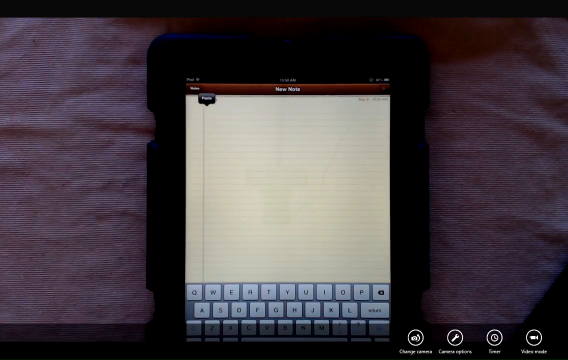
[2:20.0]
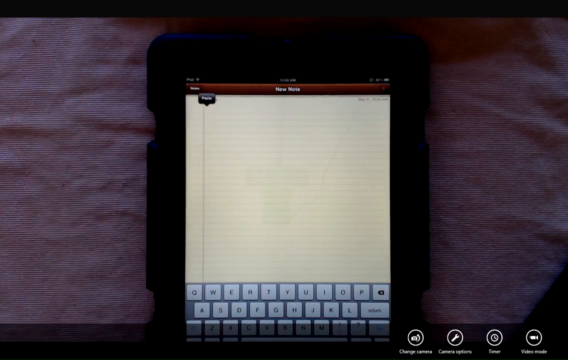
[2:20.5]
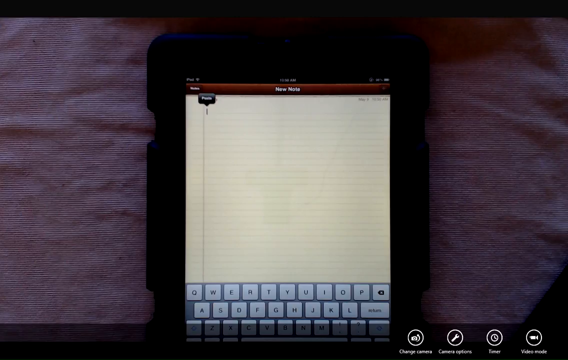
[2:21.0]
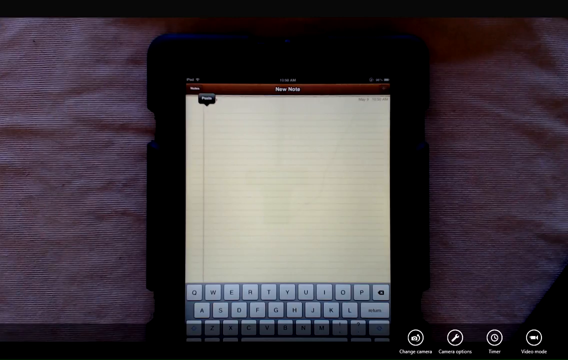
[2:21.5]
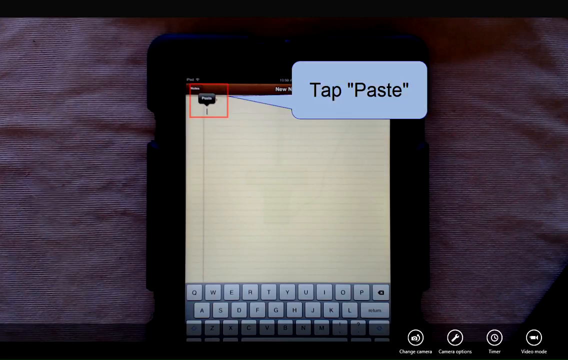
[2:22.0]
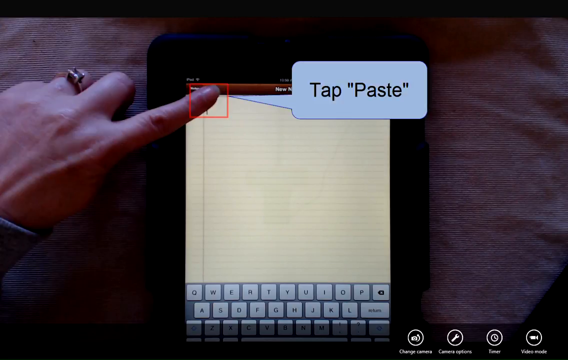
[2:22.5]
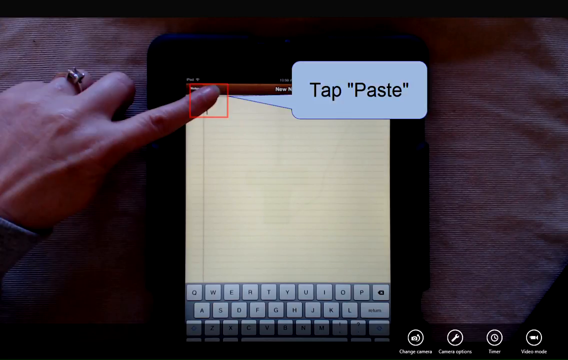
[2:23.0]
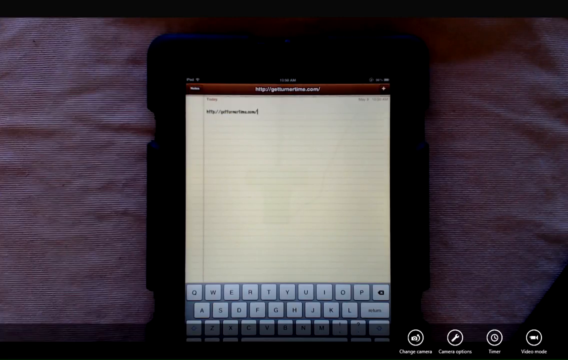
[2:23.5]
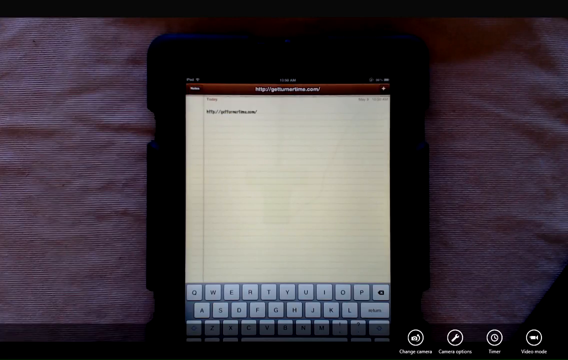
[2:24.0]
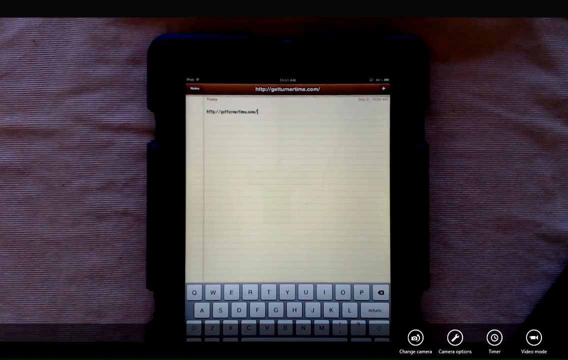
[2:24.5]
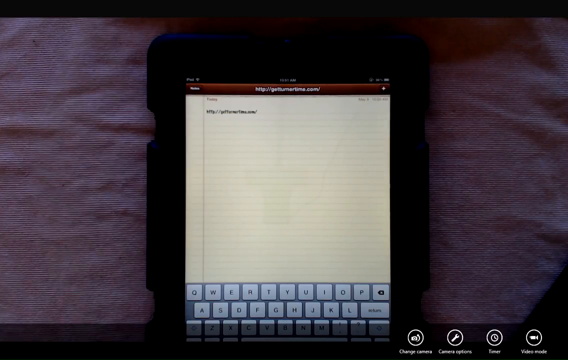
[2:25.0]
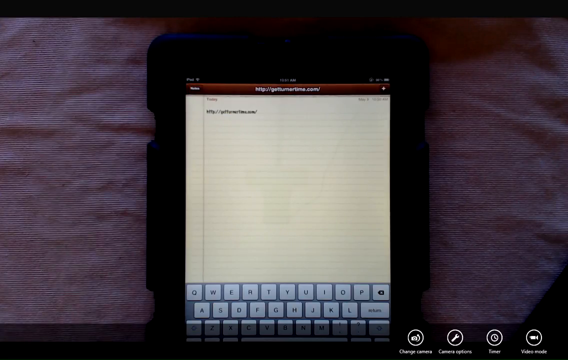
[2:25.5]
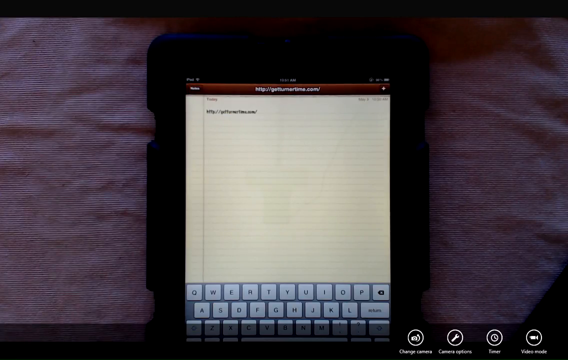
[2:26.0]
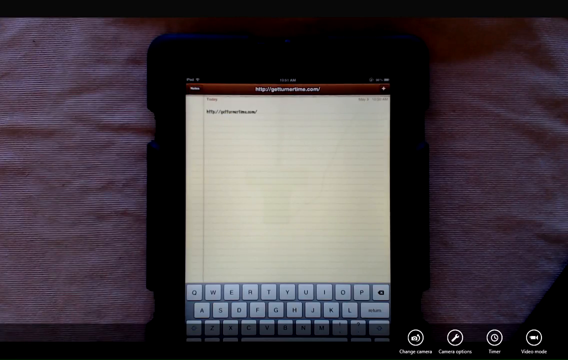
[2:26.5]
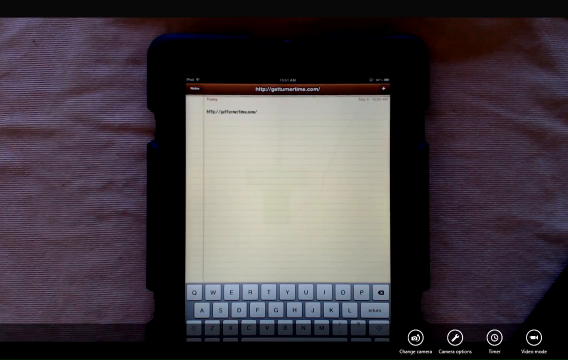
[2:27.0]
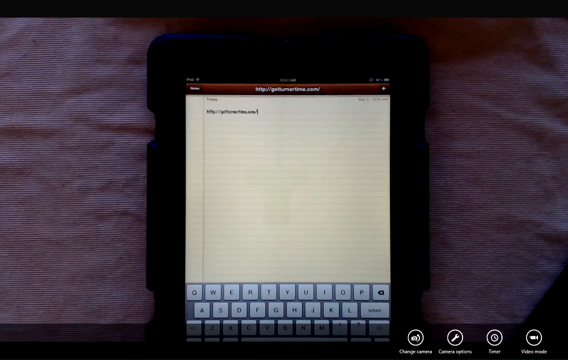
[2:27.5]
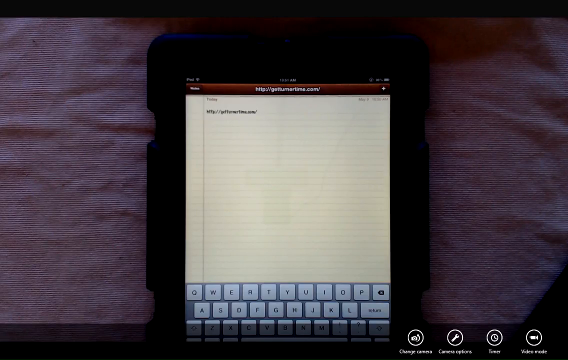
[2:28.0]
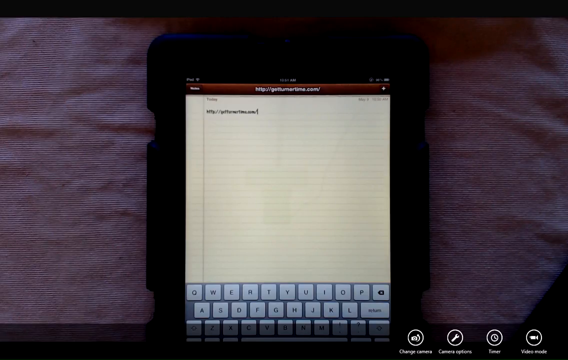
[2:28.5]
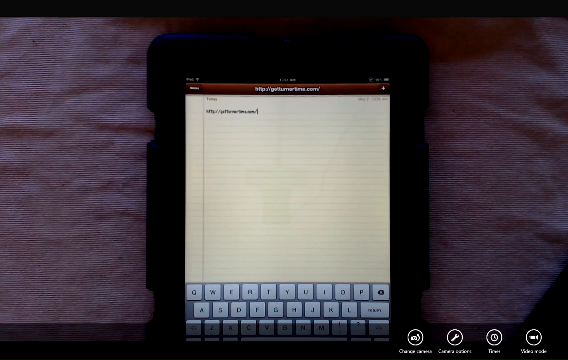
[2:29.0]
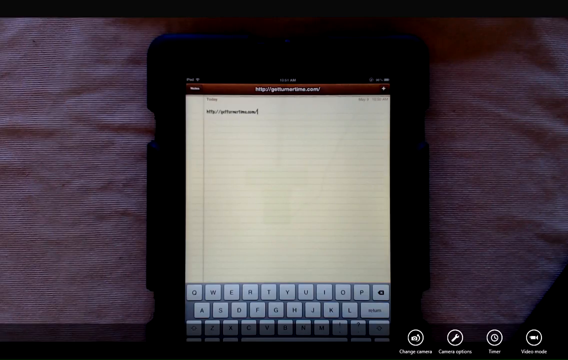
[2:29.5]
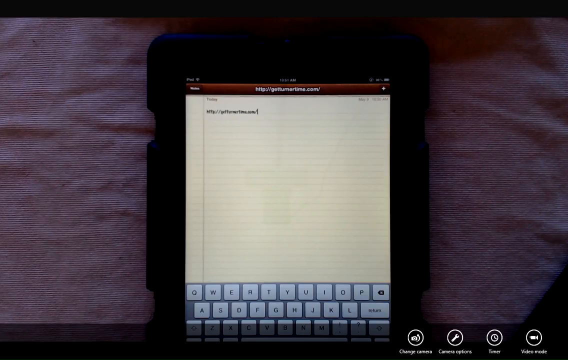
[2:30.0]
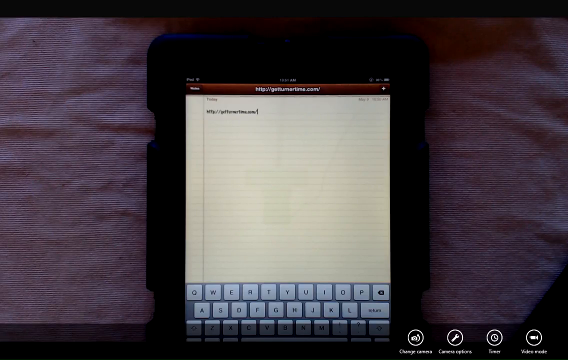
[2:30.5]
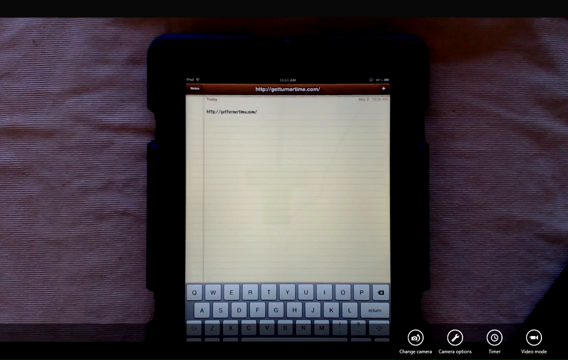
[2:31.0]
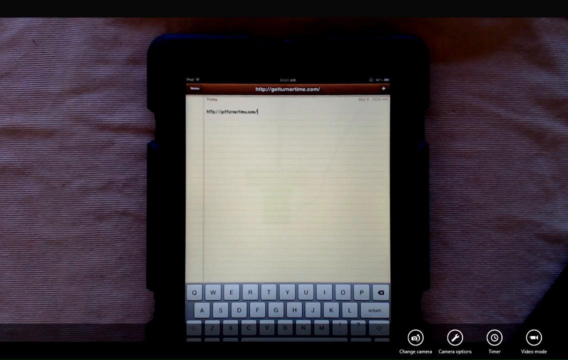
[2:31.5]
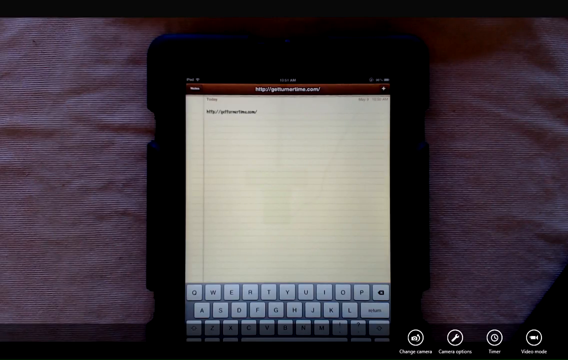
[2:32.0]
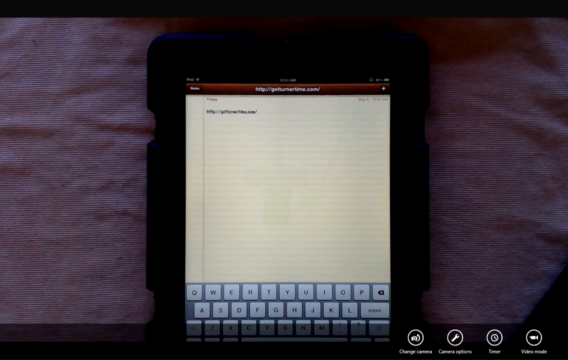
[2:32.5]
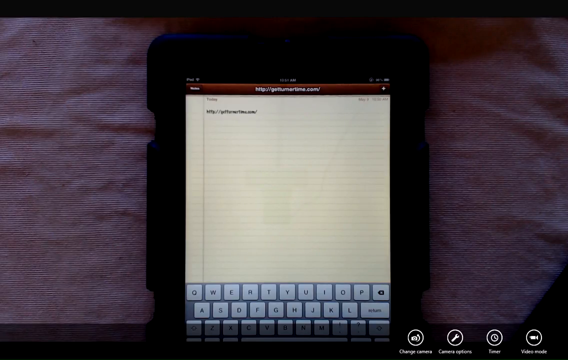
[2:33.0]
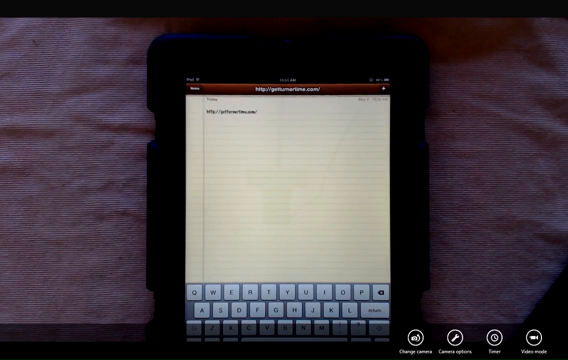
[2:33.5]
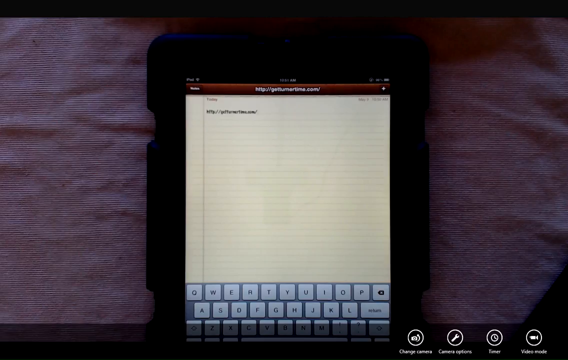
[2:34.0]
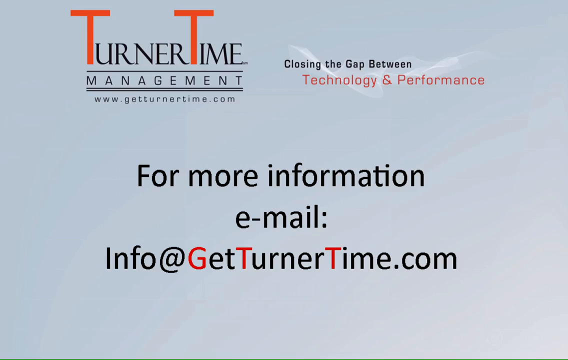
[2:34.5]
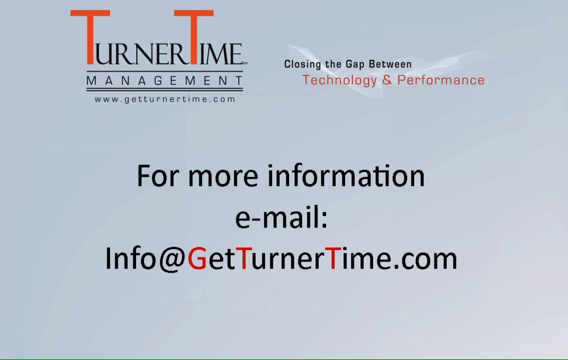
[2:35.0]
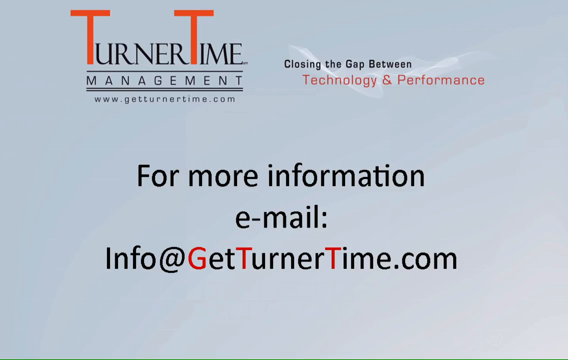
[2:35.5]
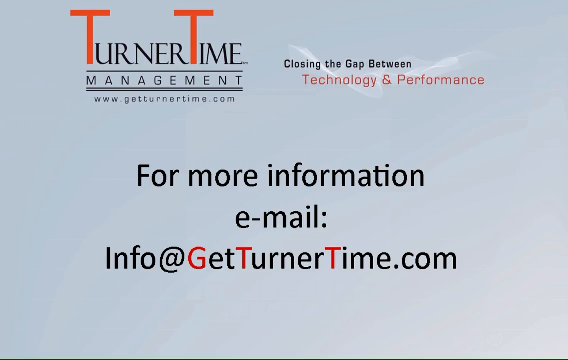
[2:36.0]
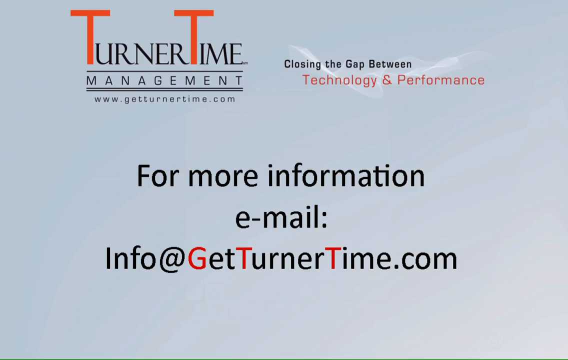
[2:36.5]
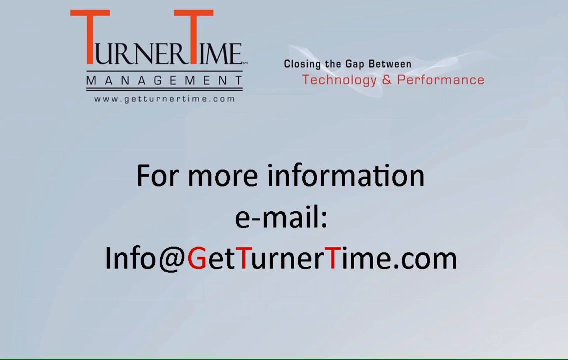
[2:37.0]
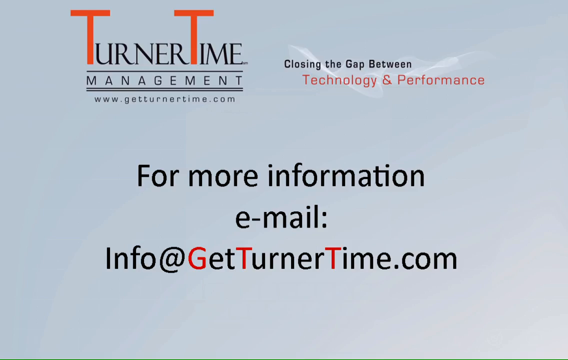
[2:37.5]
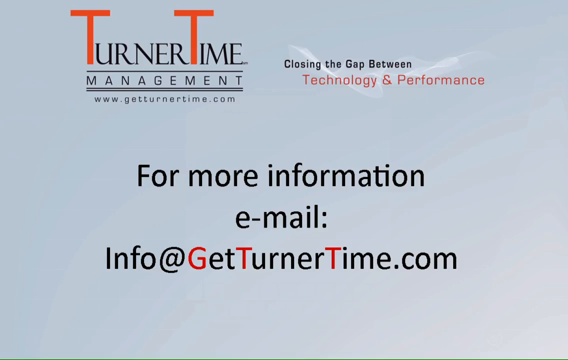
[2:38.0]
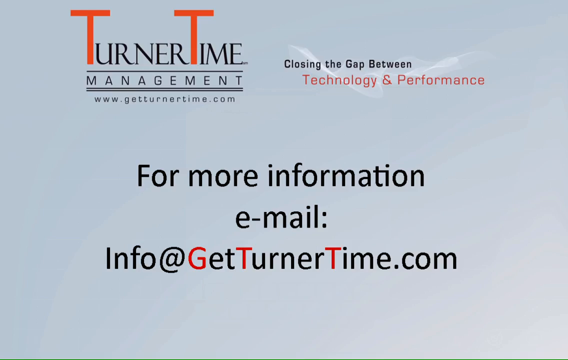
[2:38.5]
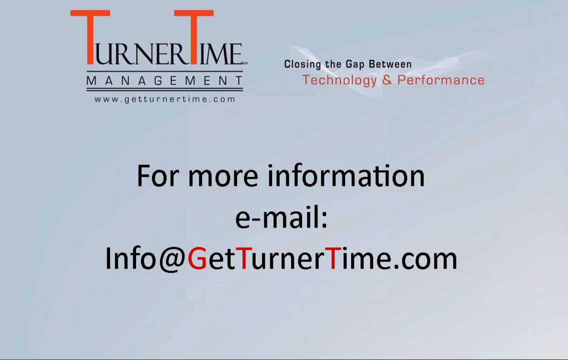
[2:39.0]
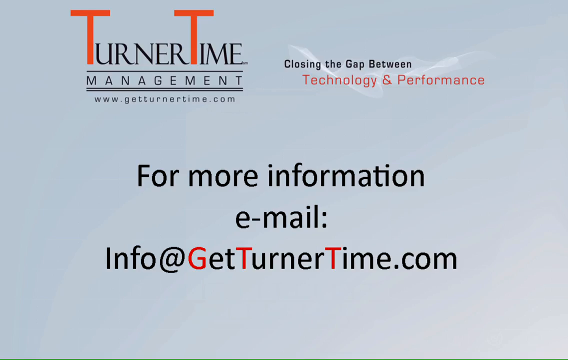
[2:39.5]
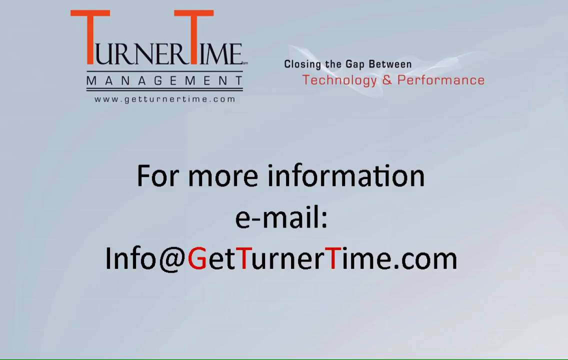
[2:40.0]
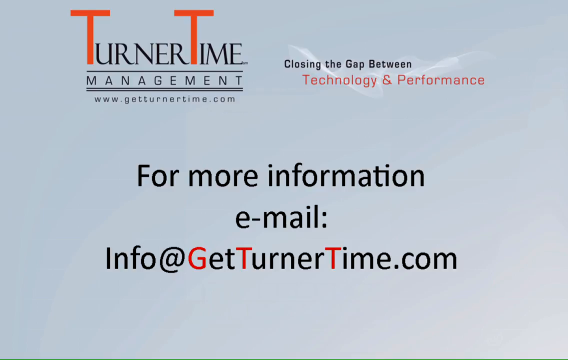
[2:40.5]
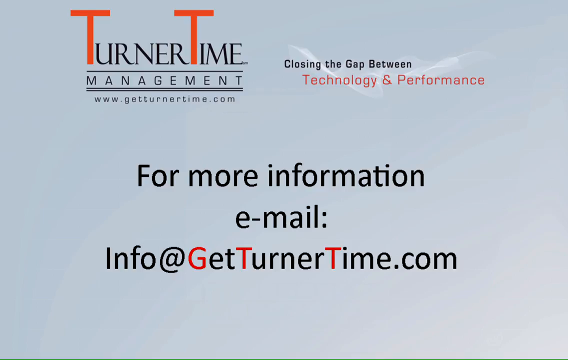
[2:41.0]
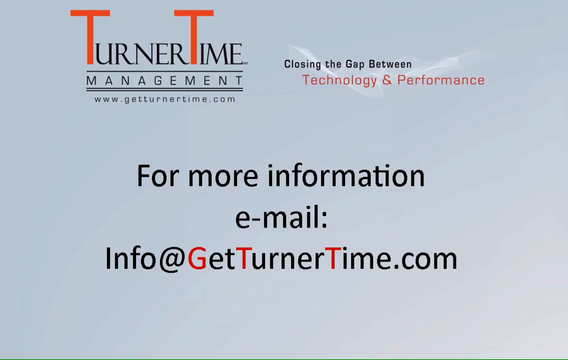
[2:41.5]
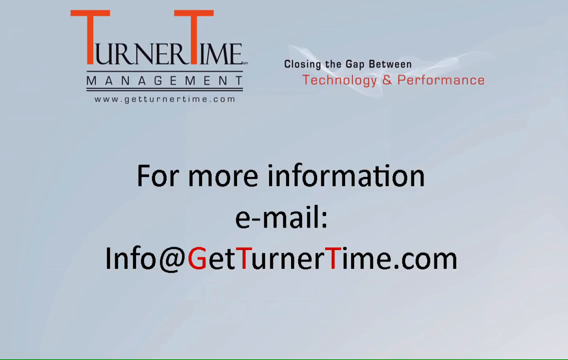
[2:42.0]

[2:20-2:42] The tablet rests on a brown colored cloth background, still open on the notepad application, which is clear with no text on it, and a keyboard is visible on screen right underneath the notepad. A paste icon in the upper left corner is outlined in a square red box, and a chat bubble pops up pointing to the red box saying "tap paste." At the same time the user's left hand comes into view, and the left index finger hovers over the paste icon and taps it, pasting a link at the very top left of the notepad. The text cursor flashes on and off next to the link for several seconds.